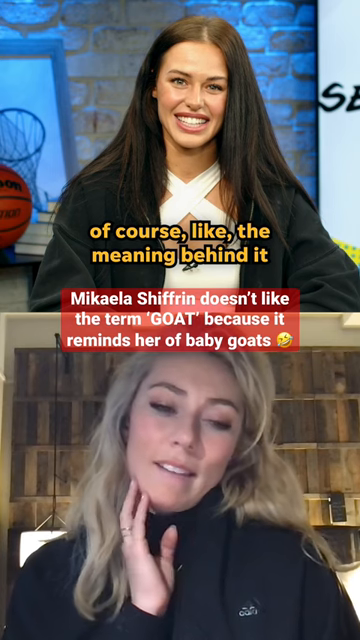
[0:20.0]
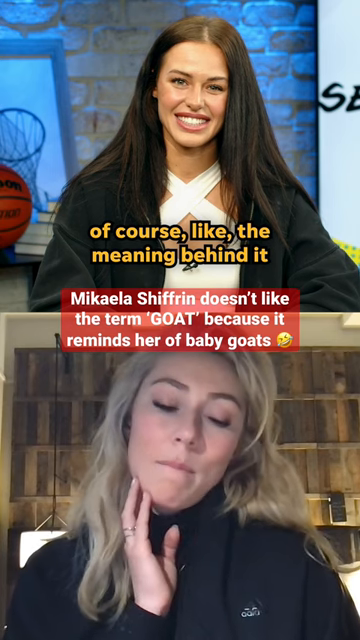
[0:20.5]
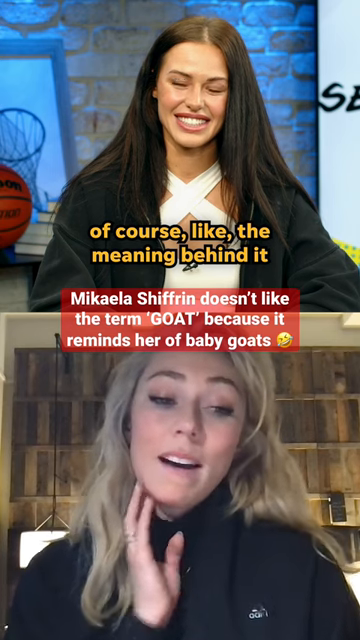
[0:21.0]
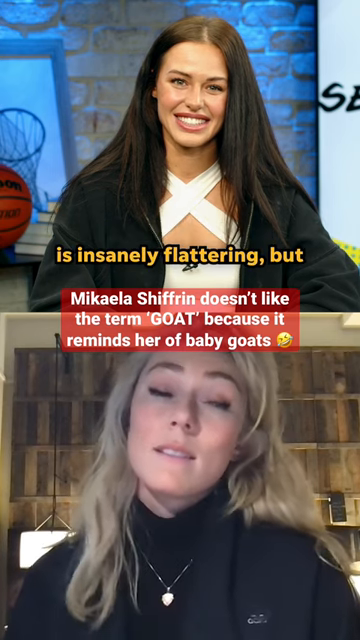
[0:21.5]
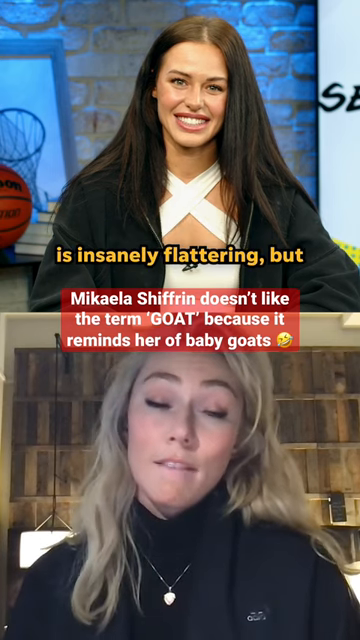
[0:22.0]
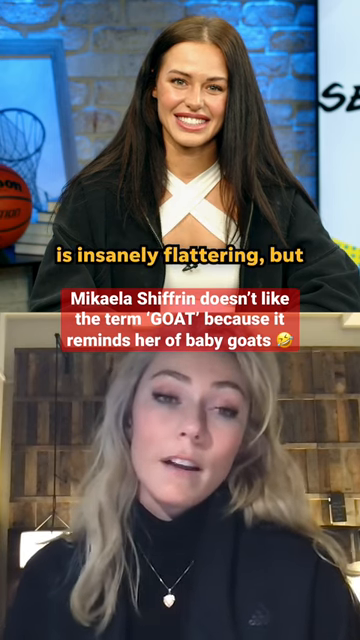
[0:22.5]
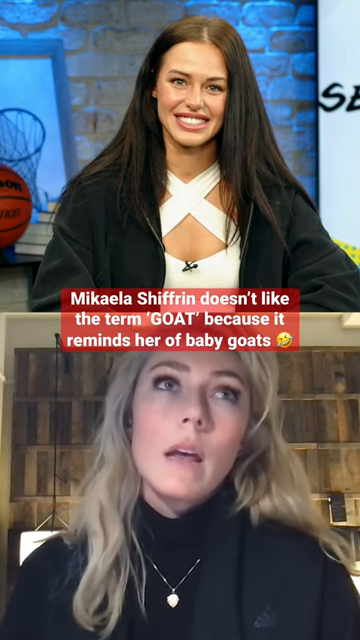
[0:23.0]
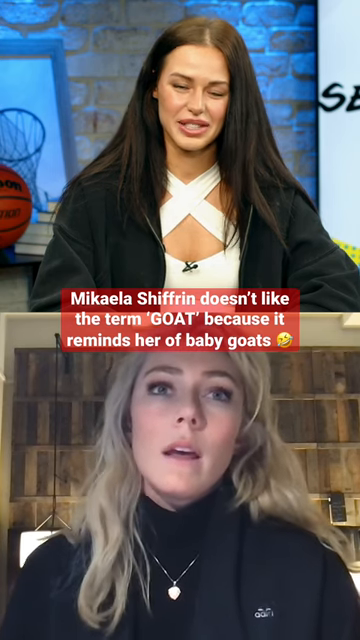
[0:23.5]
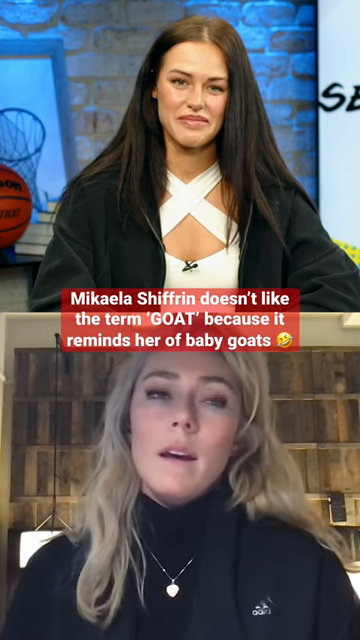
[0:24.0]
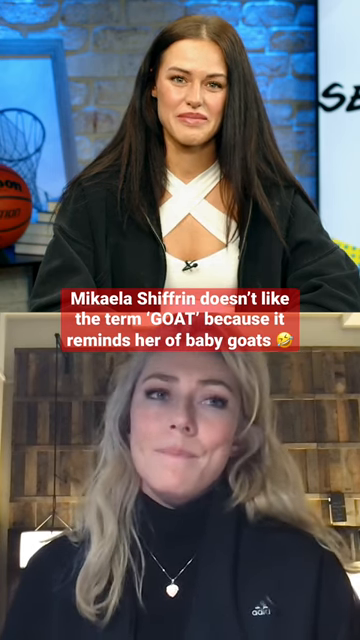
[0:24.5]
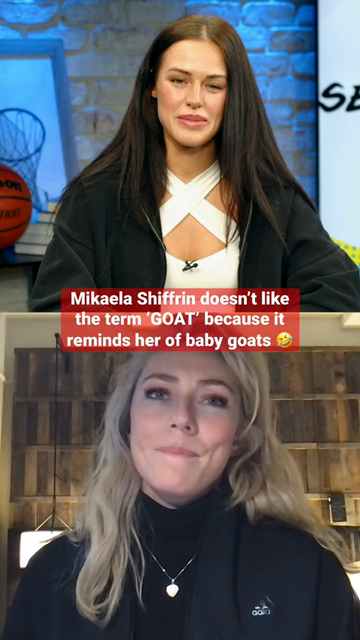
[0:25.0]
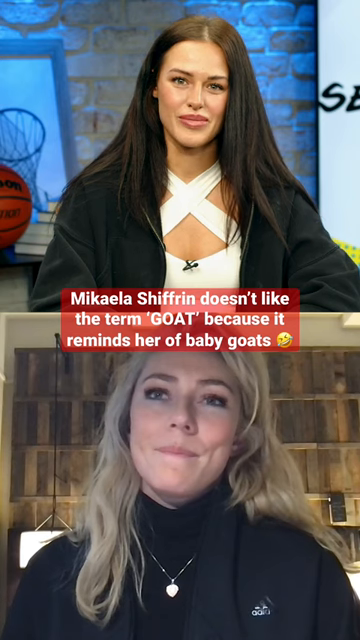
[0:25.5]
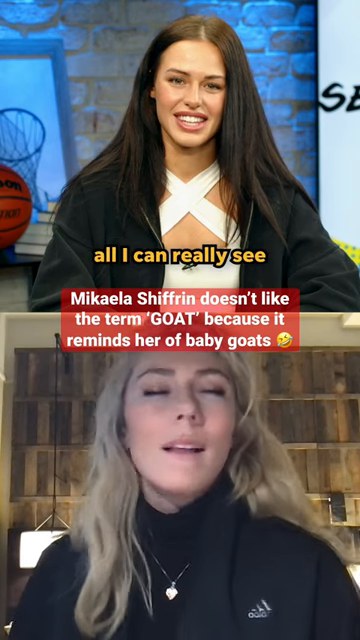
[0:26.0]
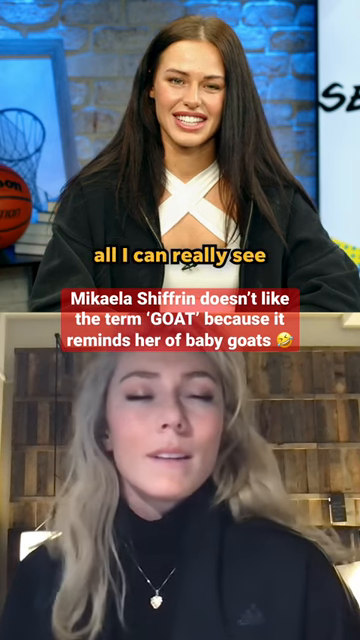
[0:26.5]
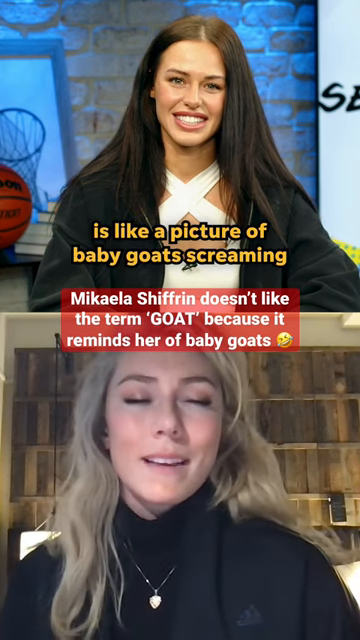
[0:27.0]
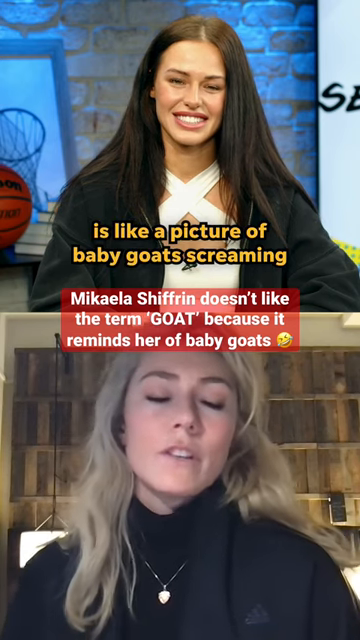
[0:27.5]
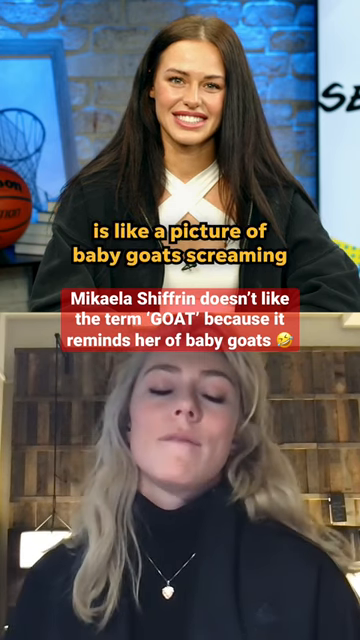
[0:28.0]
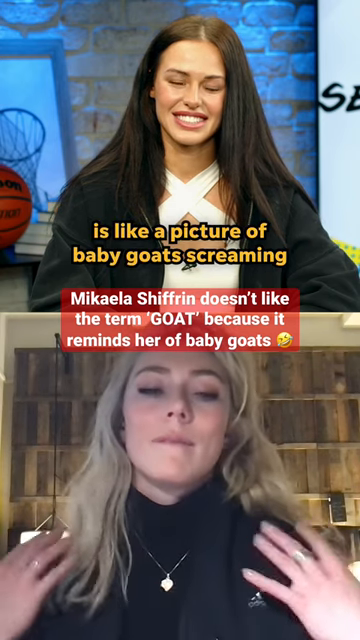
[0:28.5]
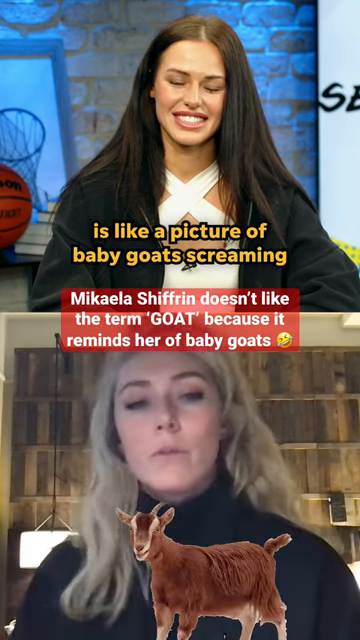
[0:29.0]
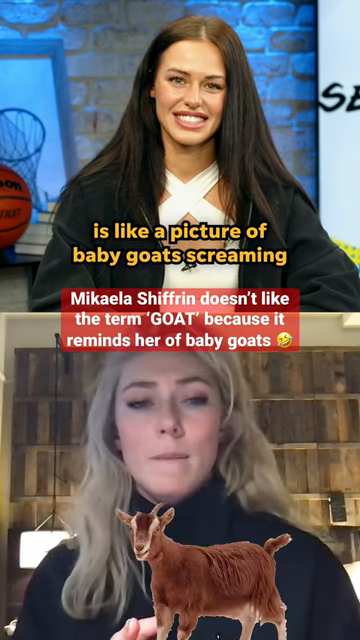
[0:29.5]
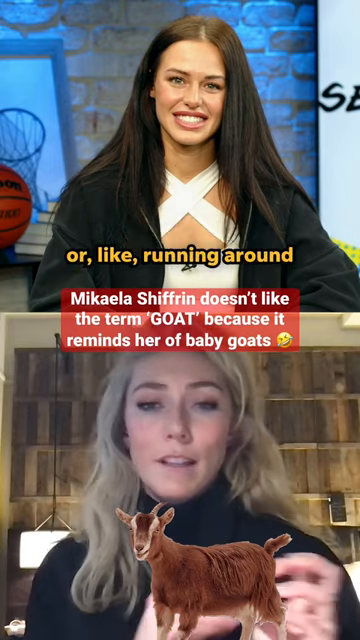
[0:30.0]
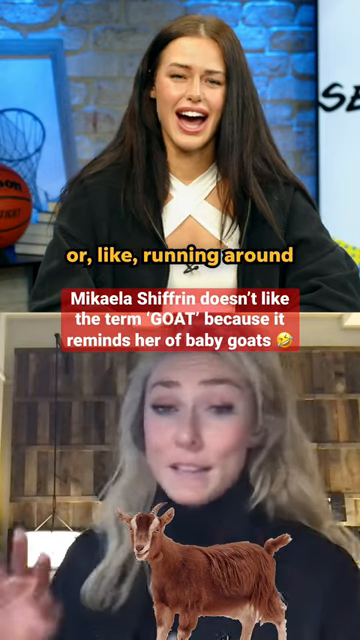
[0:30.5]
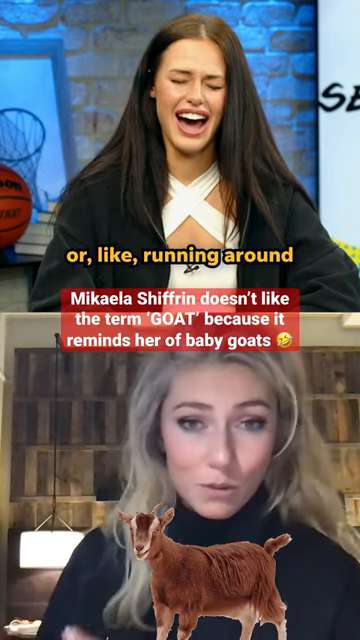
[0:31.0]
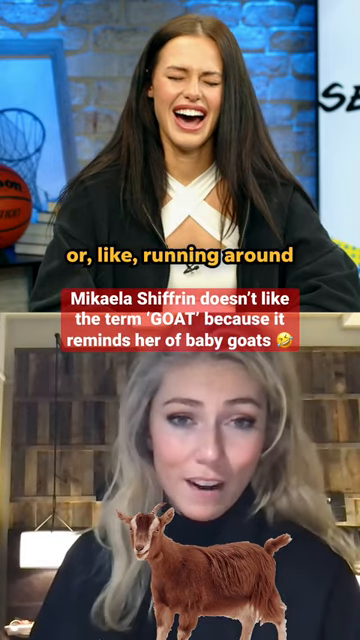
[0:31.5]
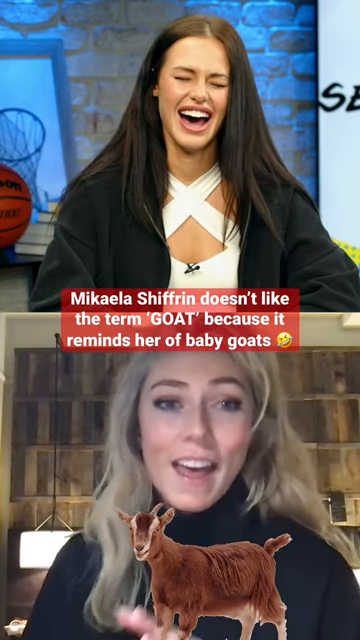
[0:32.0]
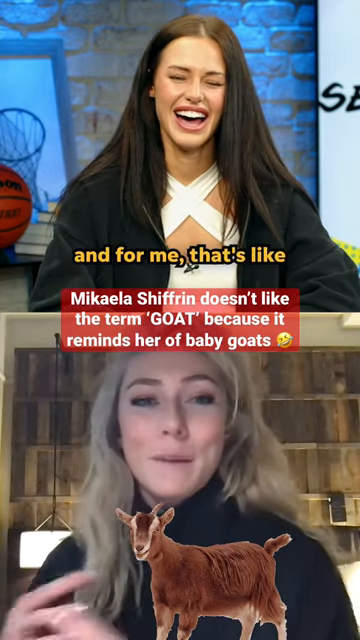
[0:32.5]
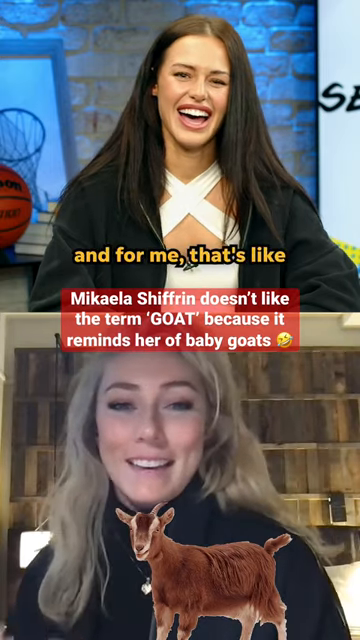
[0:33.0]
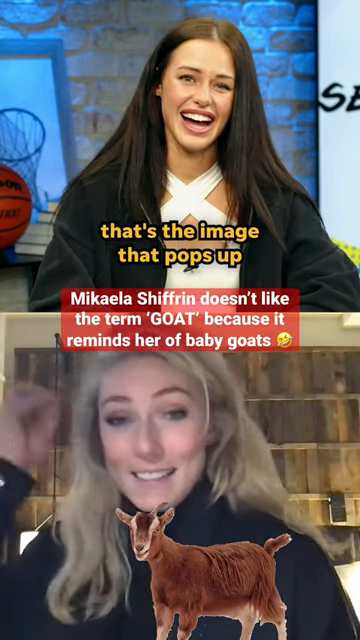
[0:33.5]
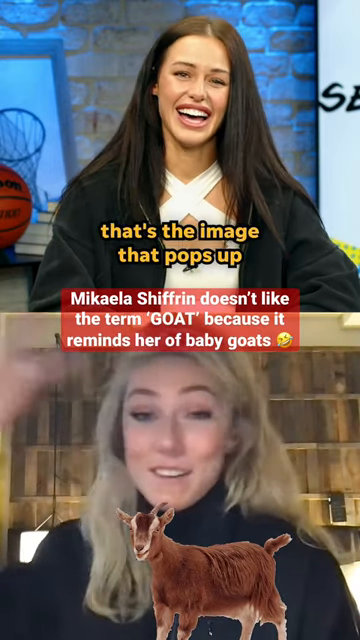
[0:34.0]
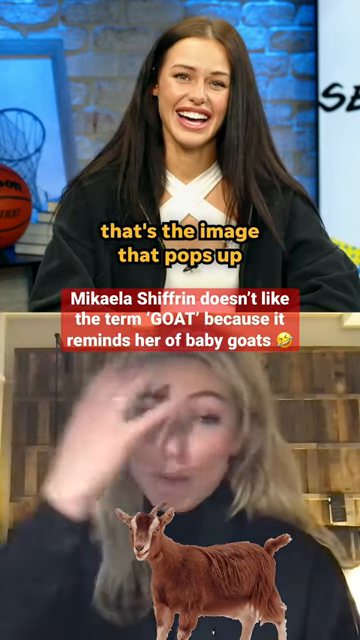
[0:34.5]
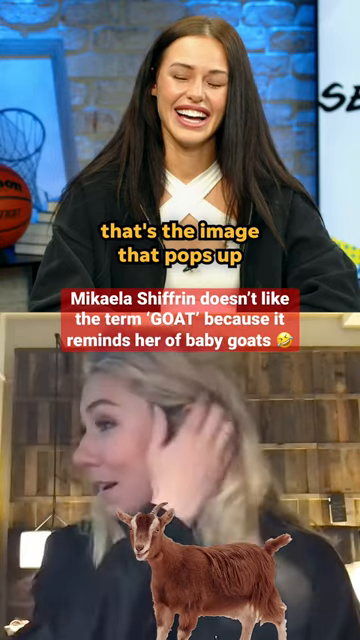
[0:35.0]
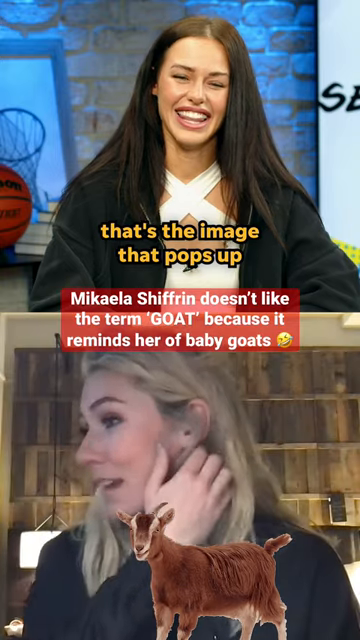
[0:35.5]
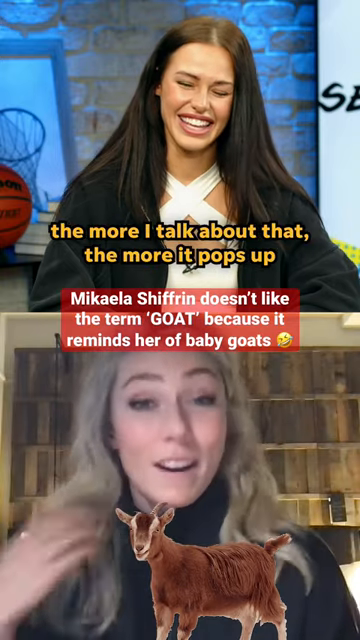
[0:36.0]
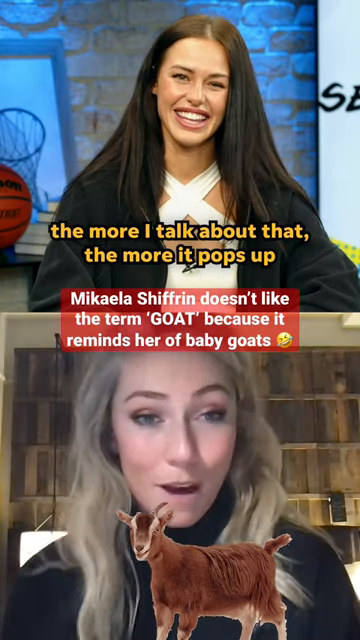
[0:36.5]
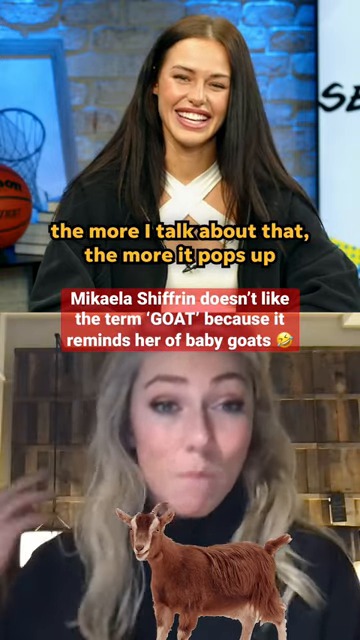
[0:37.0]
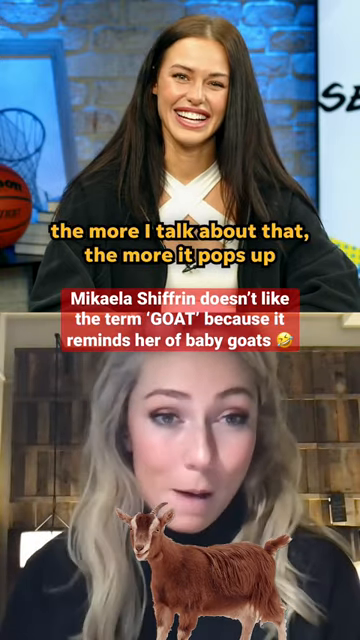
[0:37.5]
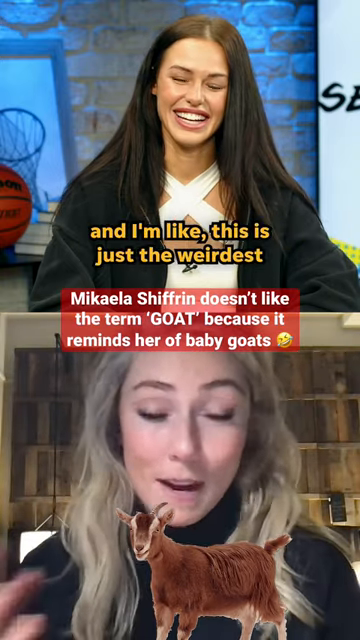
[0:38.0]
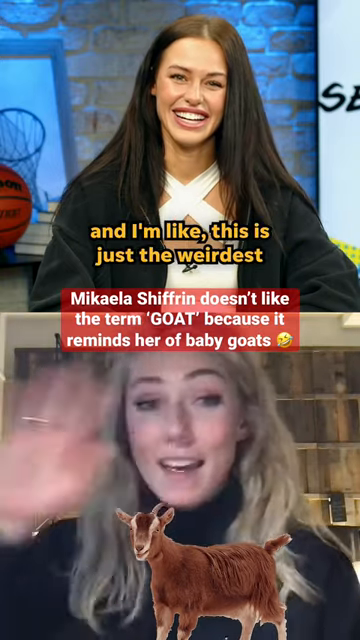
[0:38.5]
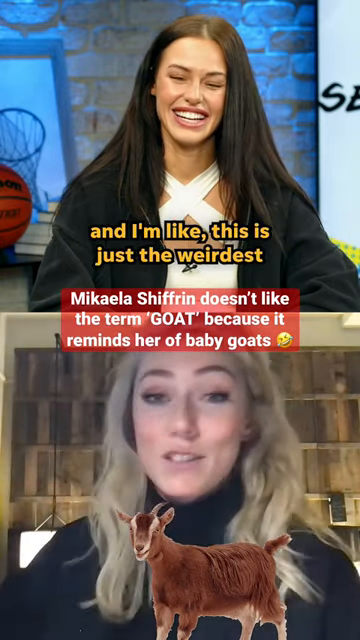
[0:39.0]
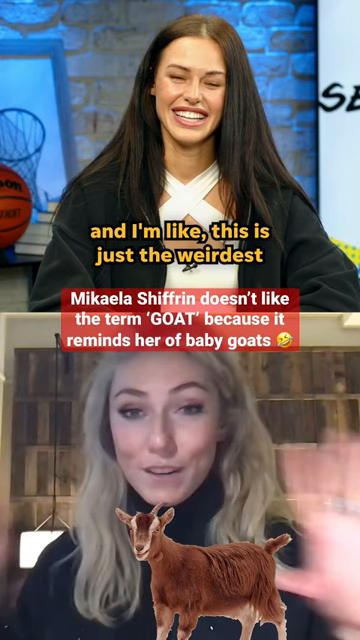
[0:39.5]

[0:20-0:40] The two girls are still talking. Text on screen reads "of course, the meaning behind it" and "Mikayla Griffin doesn't like the term goat because it reminds her of baby goats." One girl has really long, very straight, very brown hair and wears a white shirt with an X on the top; she is smiling, and her teeth are very white and very straight. The other girl, who has blonde hair, also has very white, very straight teeth. One of them has her hand on her face, and one of them is dressed in all black. A brown goat appears at the bottom of the screen, with something kind of red to it. There is a light blue background with yellow text and white letters. Lots of brick walls and computers are behind them. The two seem to be basically just playing around.